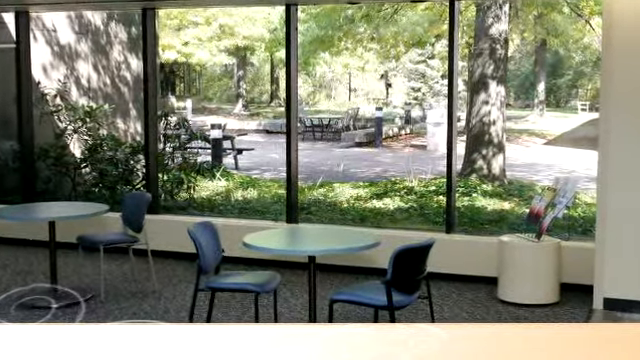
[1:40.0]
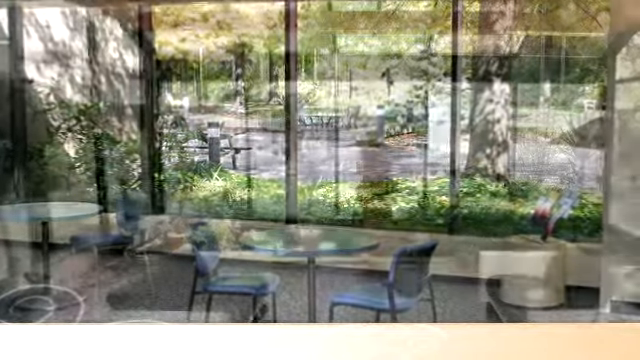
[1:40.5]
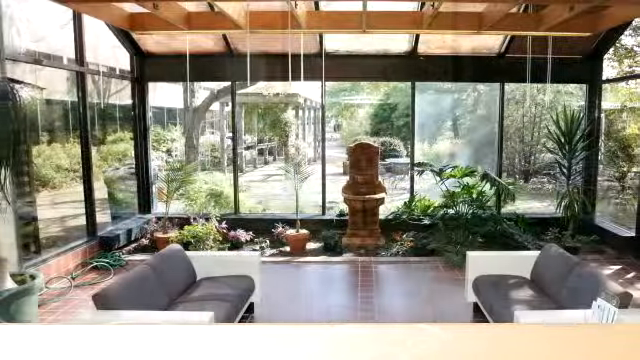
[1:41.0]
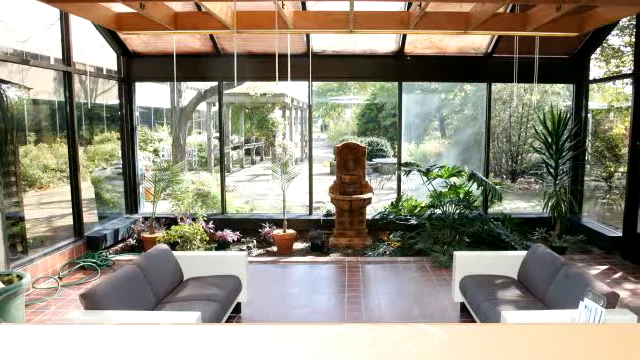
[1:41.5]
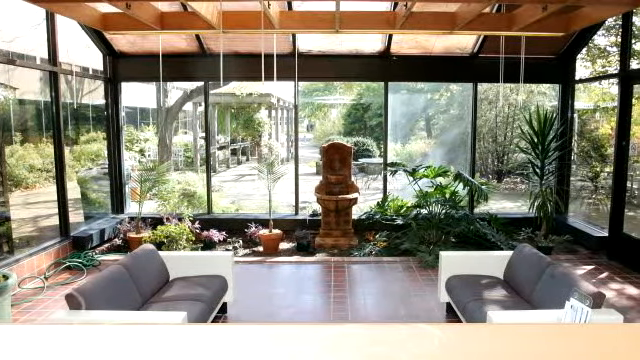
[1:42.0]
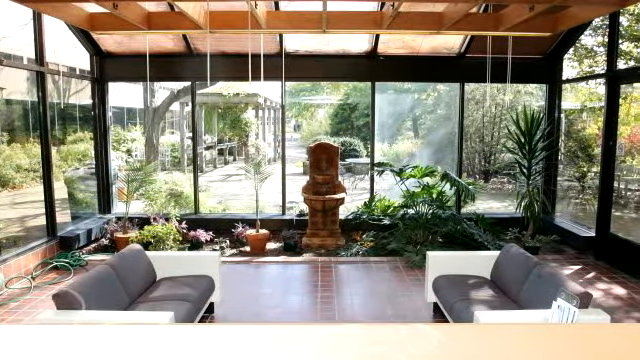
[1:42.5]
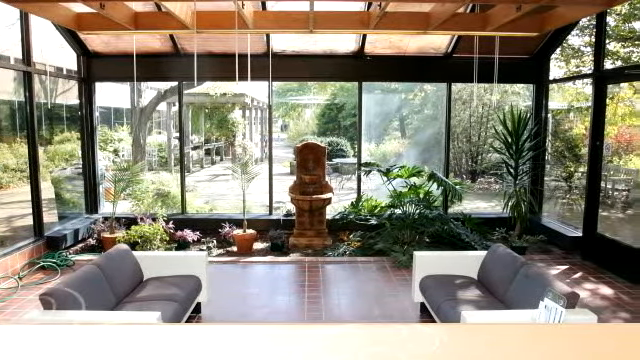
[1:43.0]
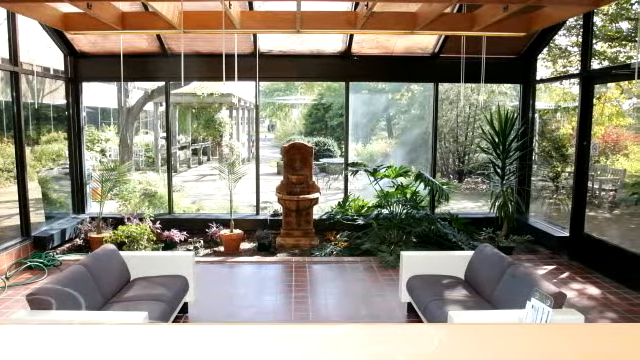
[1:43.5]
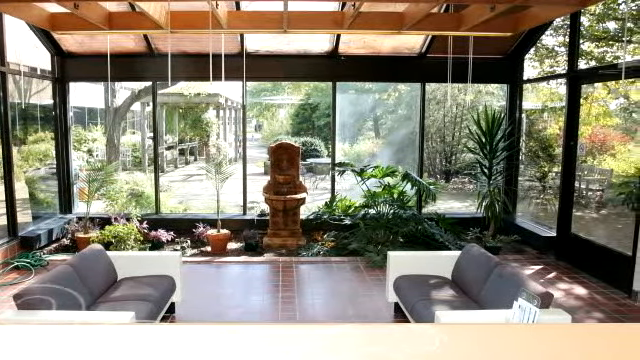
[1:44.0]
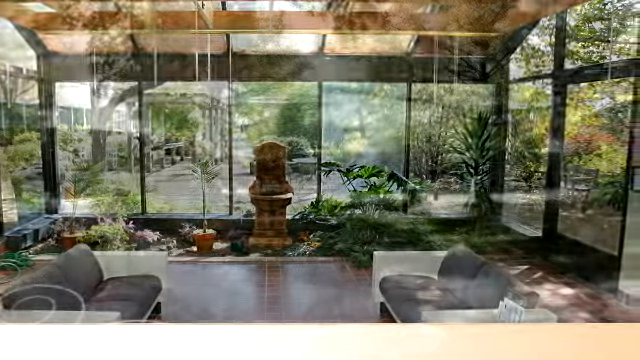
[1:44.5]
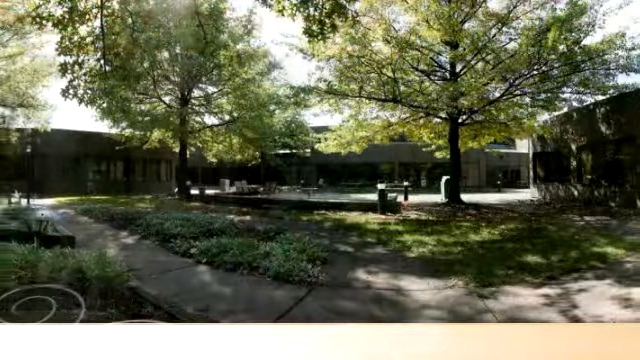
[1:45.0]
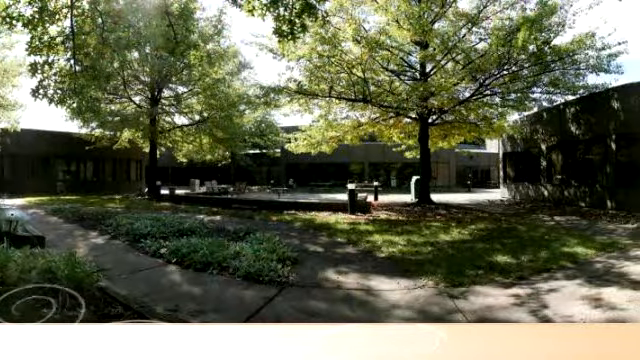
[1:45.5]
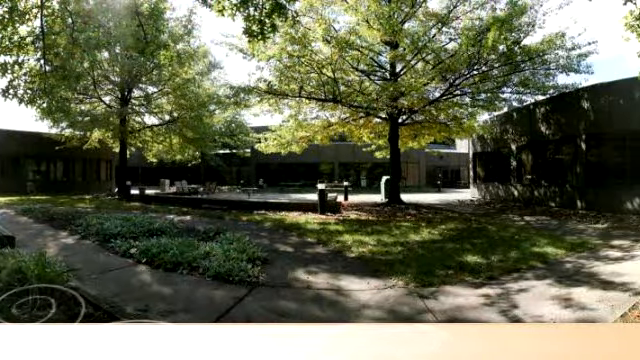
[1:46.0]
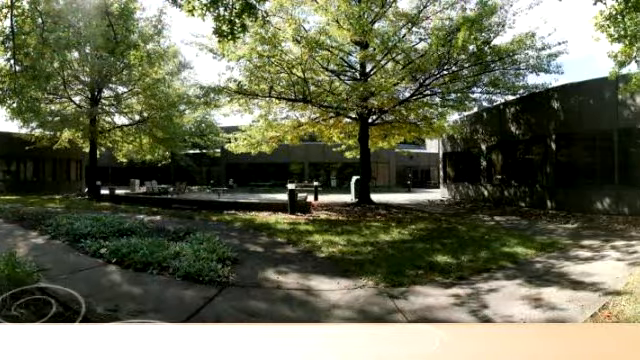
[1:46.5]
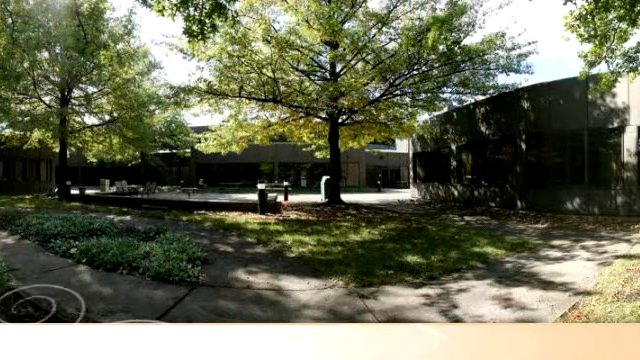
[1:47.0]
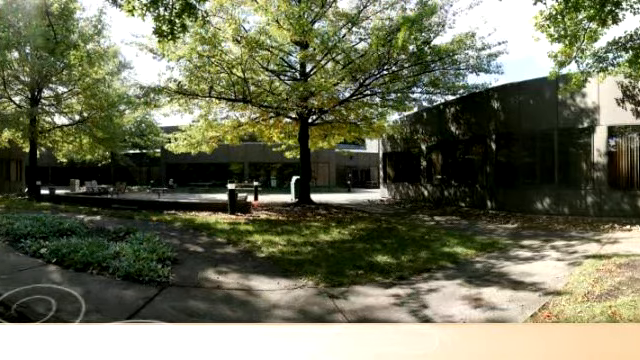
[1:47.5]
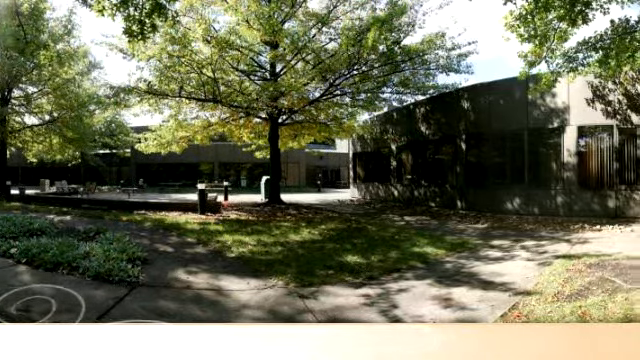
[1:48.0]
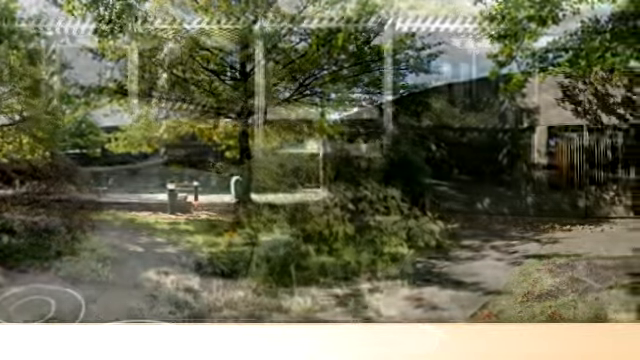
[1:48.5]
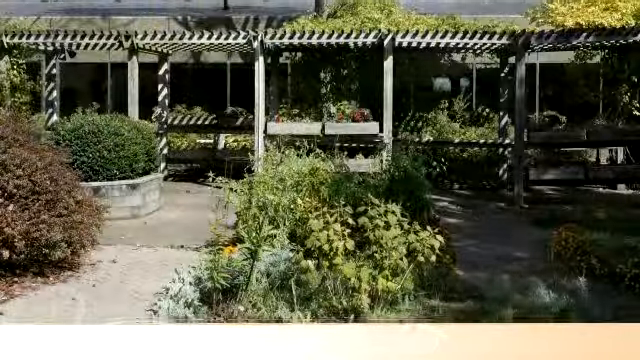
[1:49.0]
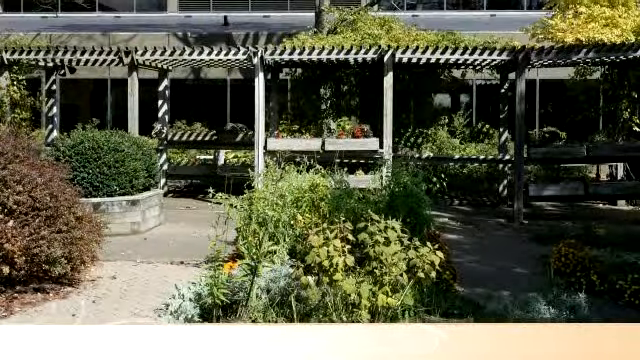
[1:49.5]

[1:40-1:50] The back wall has a display with patient information, photos of employees of that portion of the hospital, and text on the wall reading "Resource Center, Neurological Disorders, Brain Injury Program, Area for Supervisors," followed by the photos of seven different employees. The video then phases into what looks like a courtyard or outdoor therapeutic area that looks like a sunroom or greenhouse, with a great deal of foliage and greenery, palm fronds, smaller potted plants, and a small water fountain towards the back of the room. There are also two couches and other seating areas. The camera pans across, revealing an outdoor area with cafe tables and chairs, trees and a garden area. The camera then phases to that area and does a full panorama, showing a section with a trellis and other decorative items.